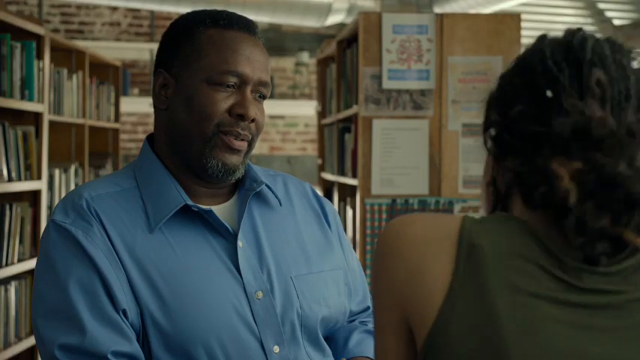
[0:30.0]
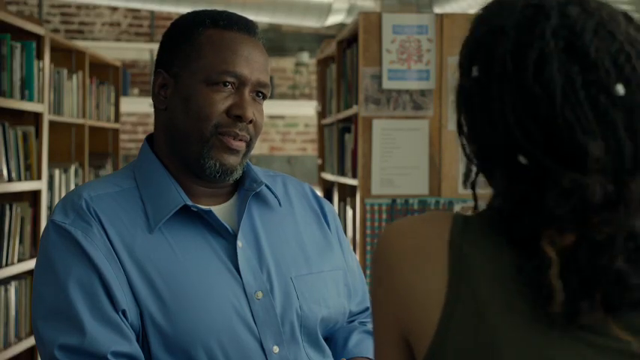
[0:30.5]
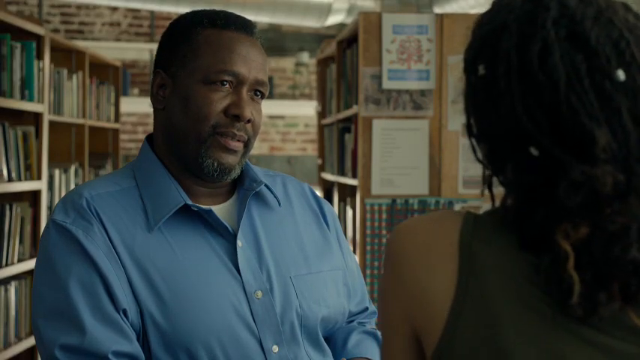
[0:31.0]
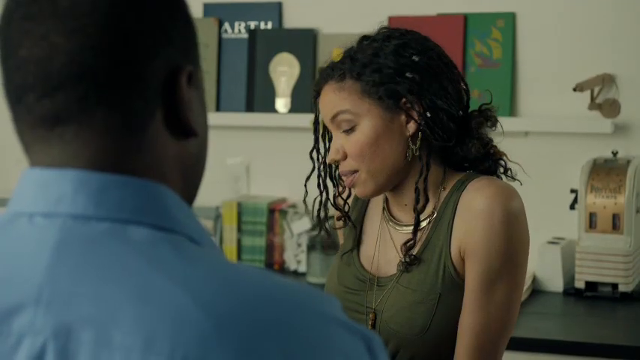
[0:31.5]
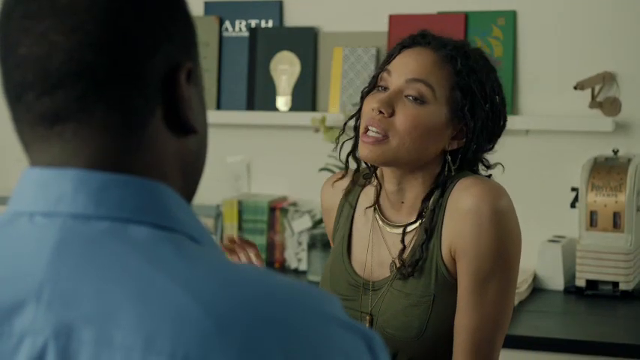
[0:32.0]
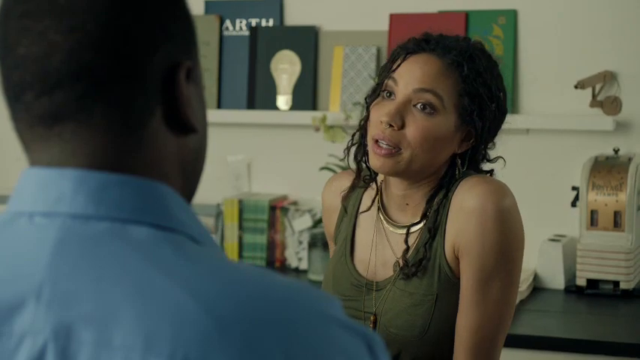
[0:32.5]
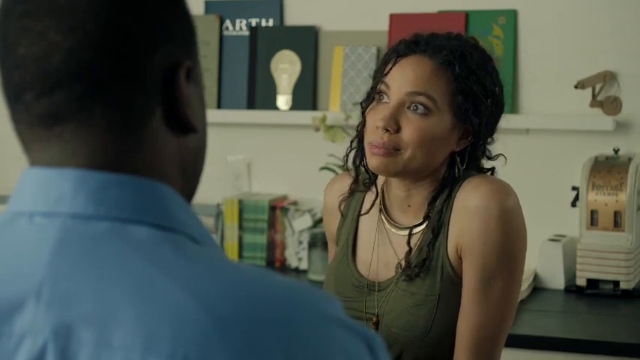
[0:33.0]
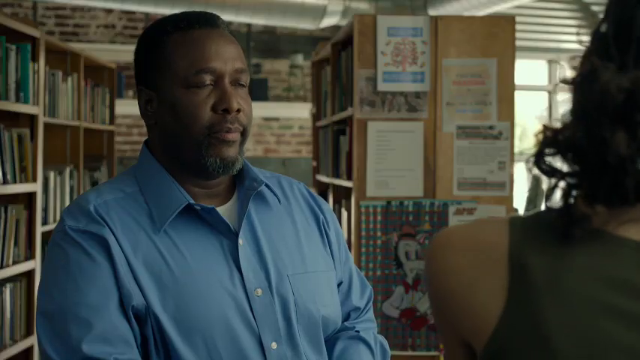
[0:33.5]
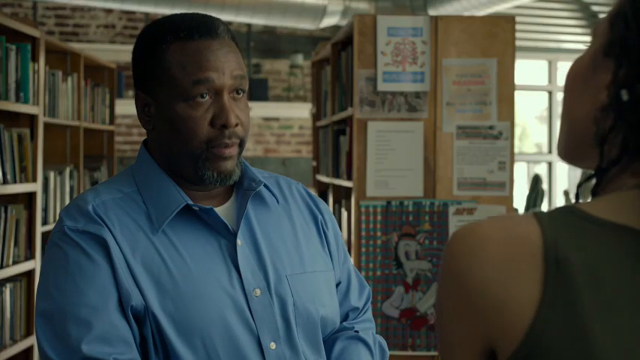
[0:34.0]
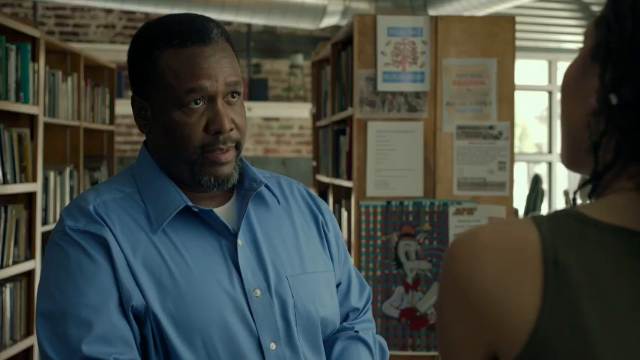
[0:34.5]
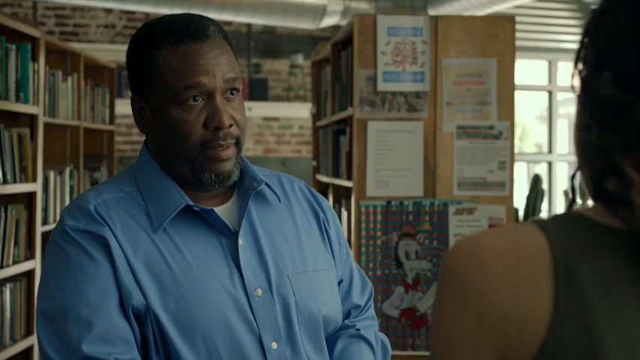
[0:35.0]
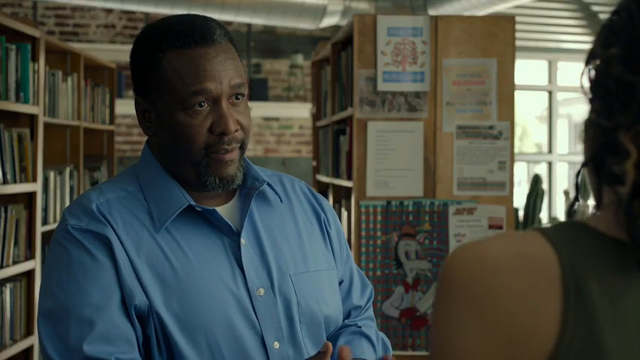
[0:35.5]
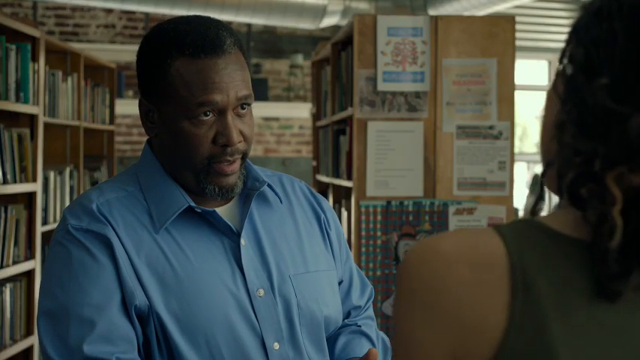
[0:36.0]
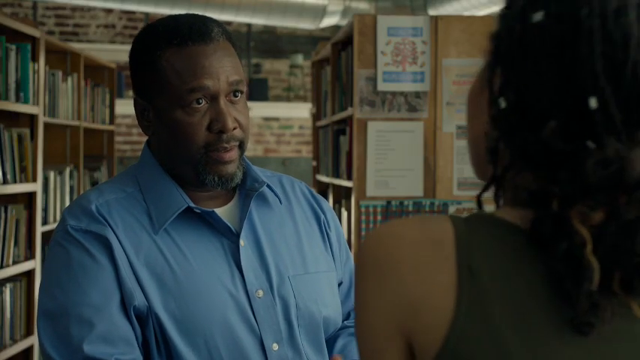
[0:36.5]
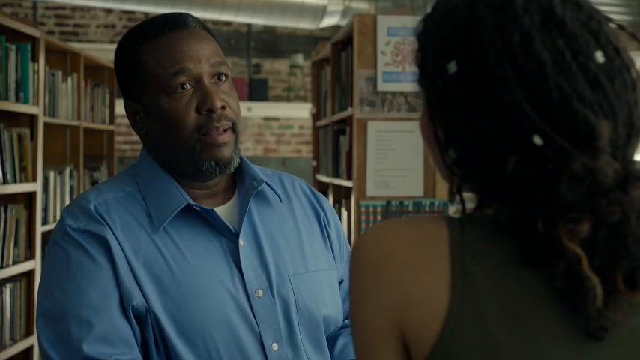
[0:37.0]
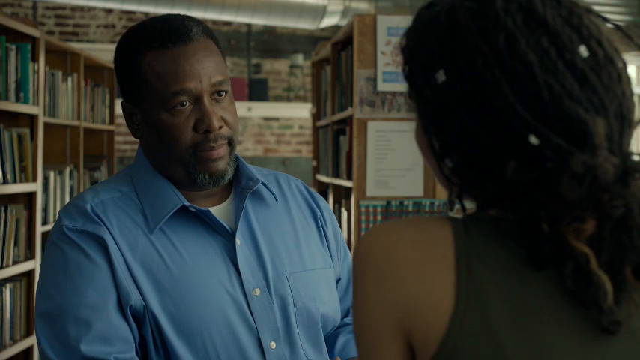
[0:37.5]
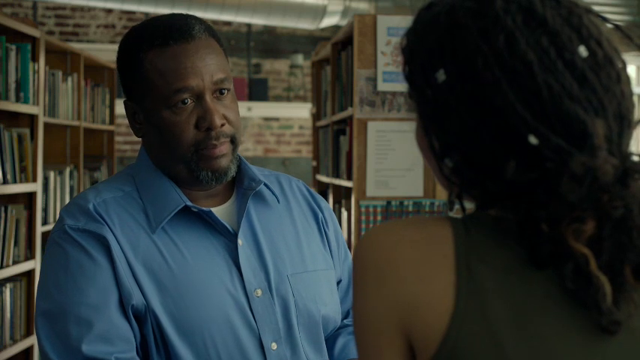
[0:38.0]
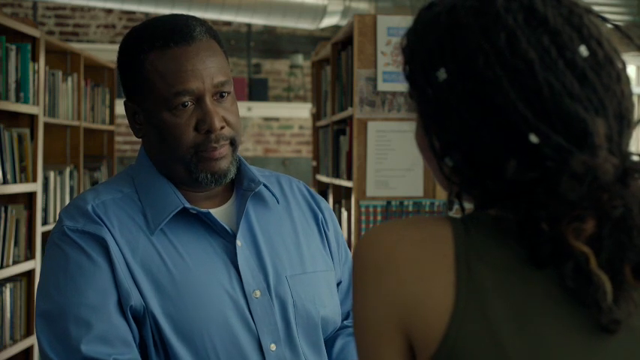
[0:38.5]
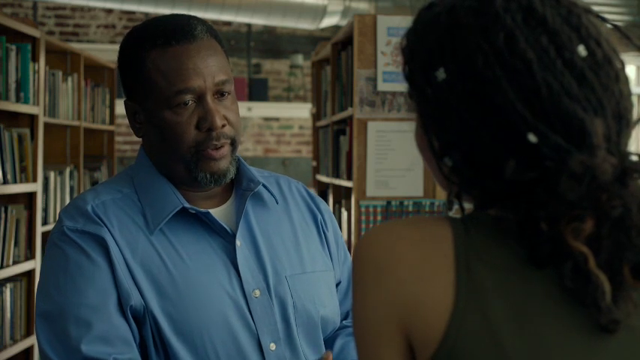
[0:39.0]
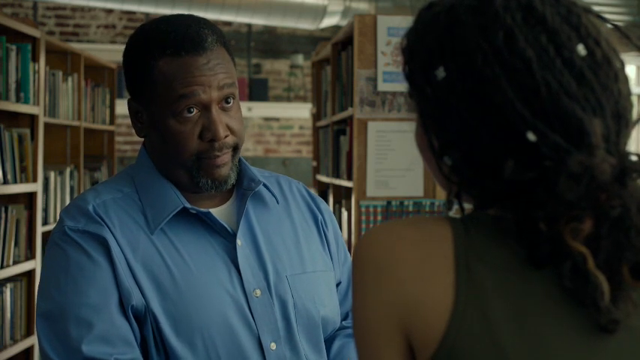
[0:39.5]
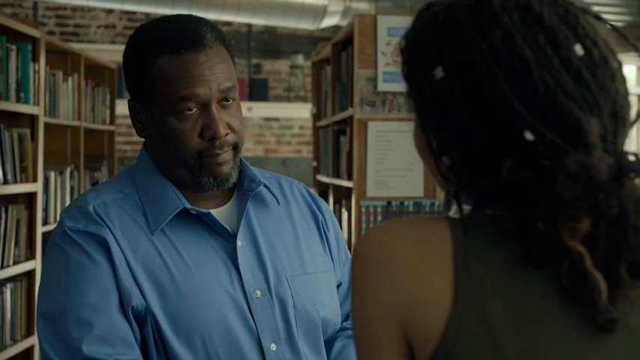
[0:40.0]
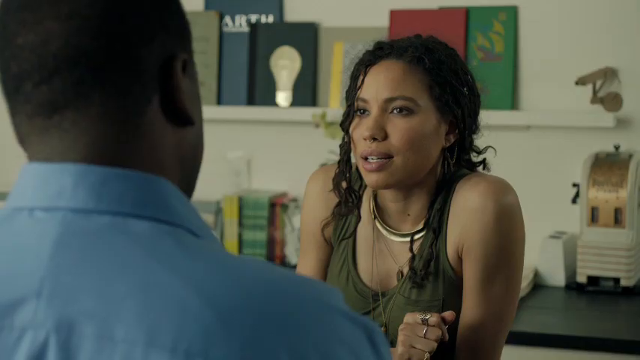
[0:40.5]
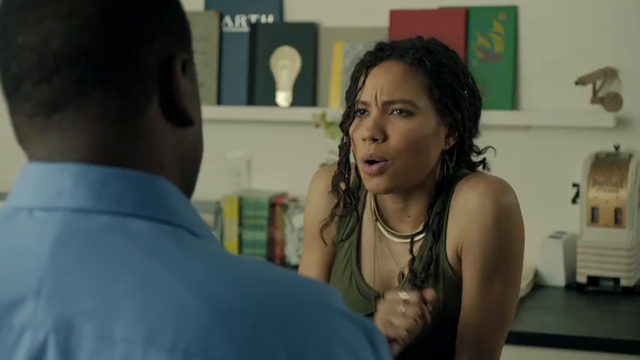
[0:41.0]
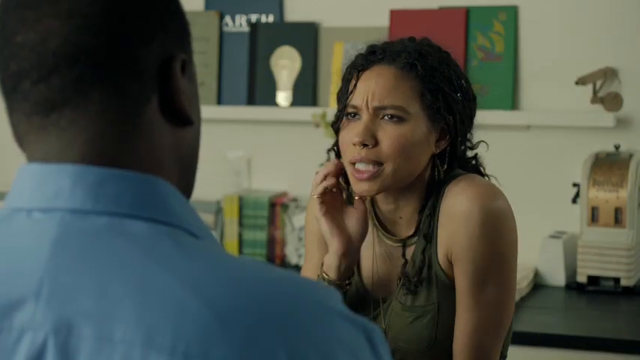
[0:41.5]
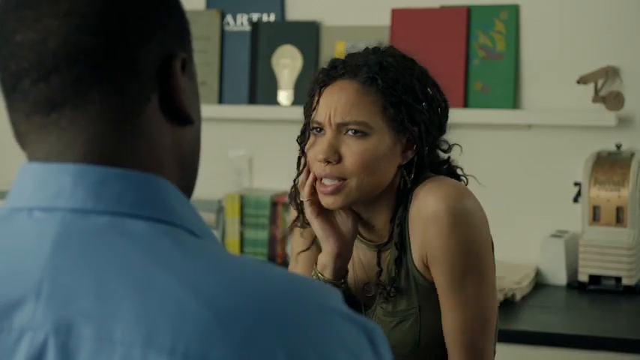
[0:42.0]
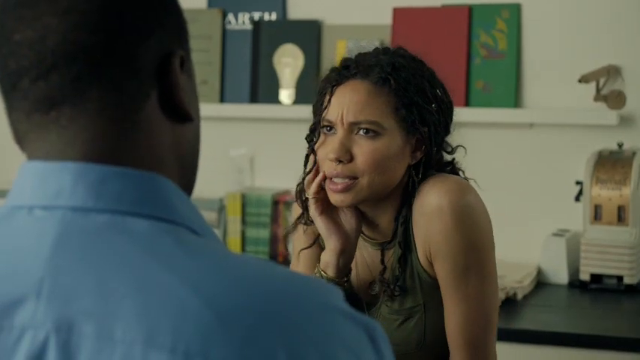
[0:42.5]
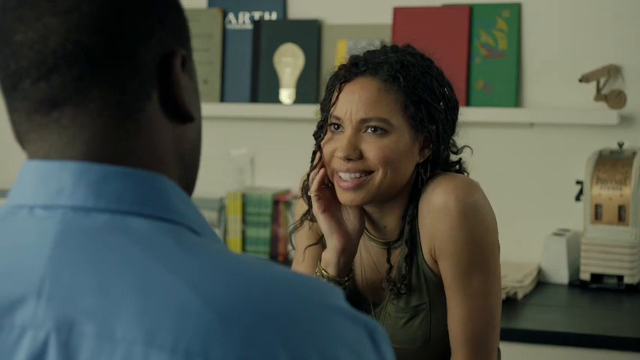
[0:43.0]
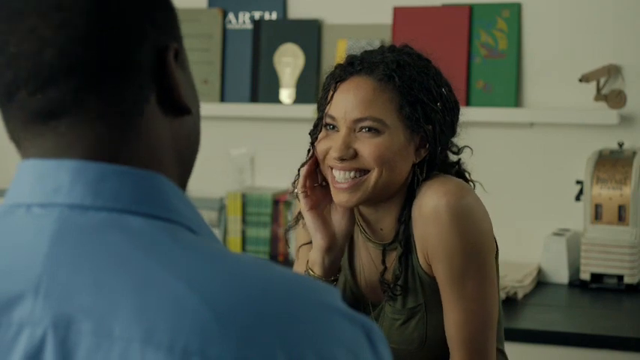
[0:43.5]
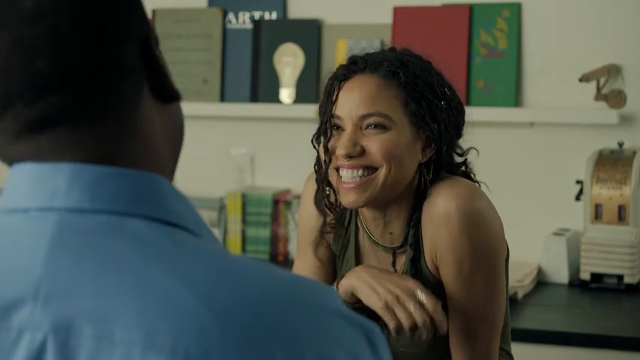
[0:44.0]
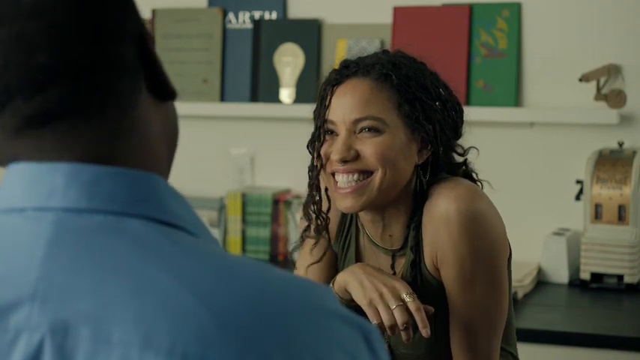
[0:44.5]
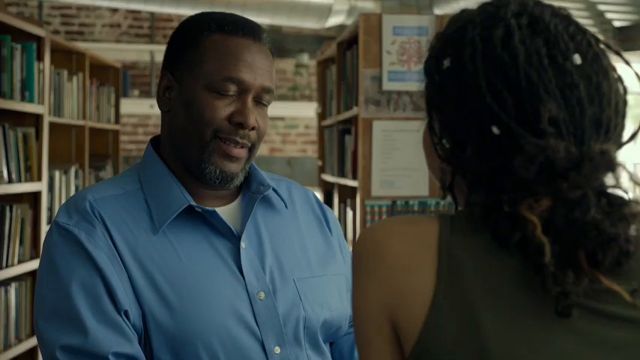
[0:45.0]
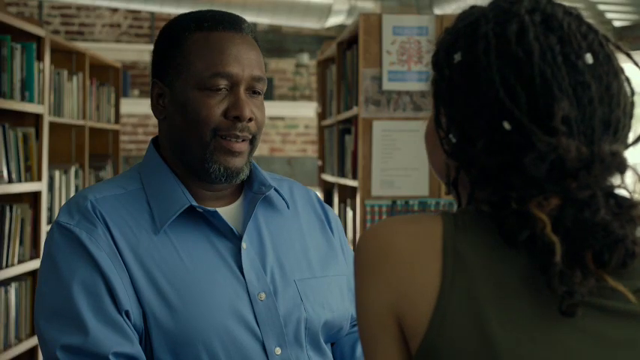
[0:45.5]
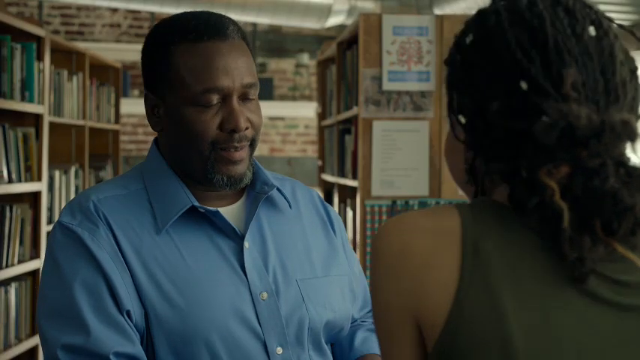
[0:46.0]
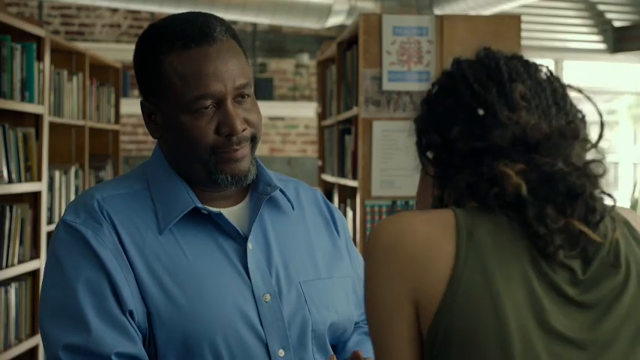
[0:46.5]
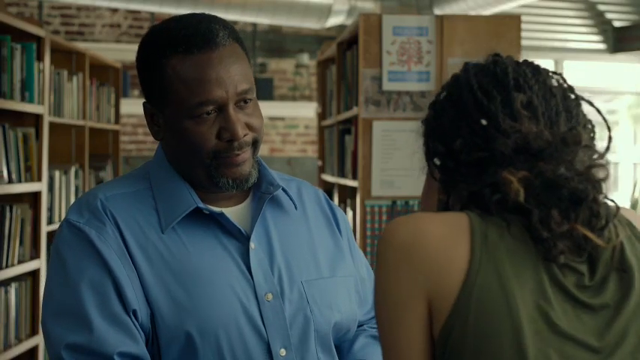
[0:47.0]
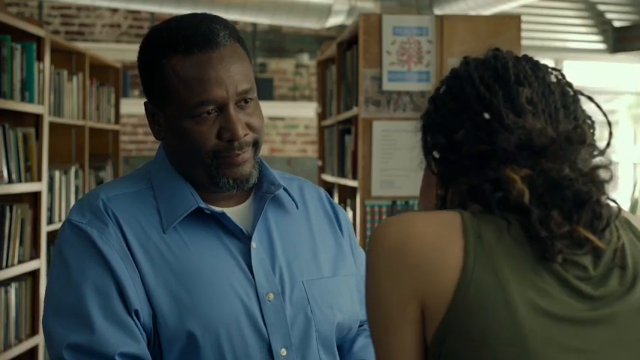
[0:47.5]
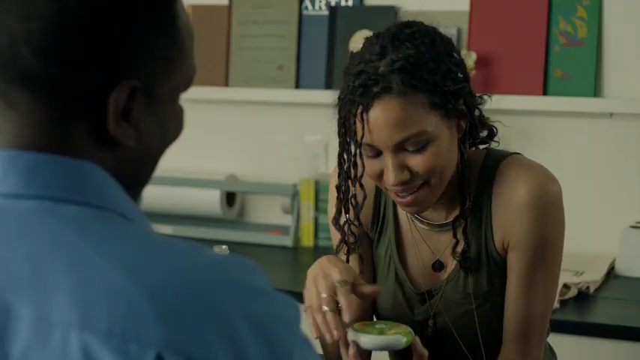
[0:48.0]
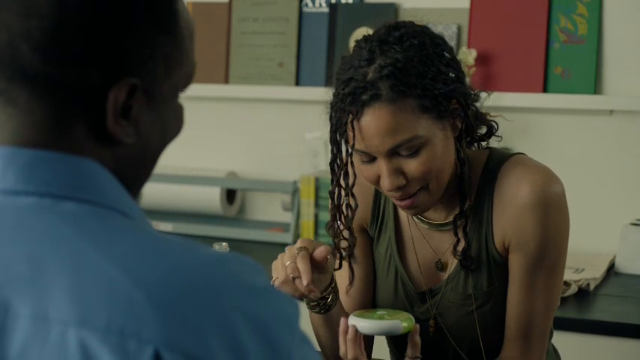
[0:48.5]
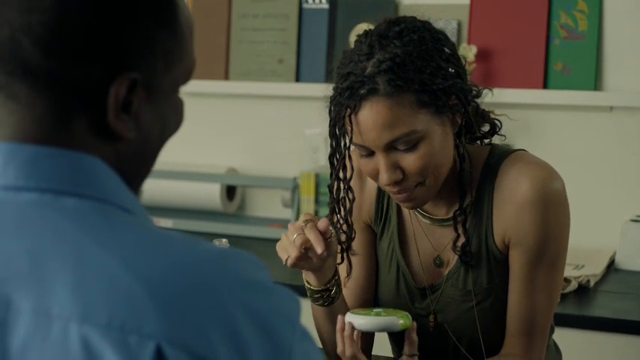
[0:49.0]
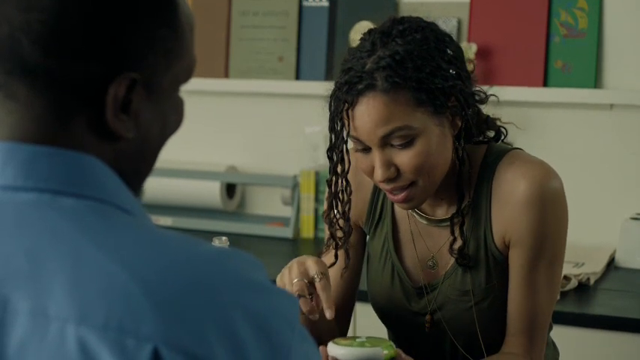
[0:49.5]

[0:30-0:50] The scene appears to be a library, with two multi-tiered bookshelves, probably about seven or eight feet high, on the left and right and a brick wall behind them. In the lower right corner of the foreground is the left two thirds of a young Black woman with dreadlocks and a dark green tank top. Just left of center, a Black man faces her, seen from the chest up, in a light blue button-up shirt with the top button unbuttoned and a white undershirt. He looks at her with a slightly confused expression. The camera switches sides so she is just right of center; she is looking down, then looks up at him with a kind of empathy-seeking face. The shot returns to him, looking a little confused, and he talks to her some more, raising his eyebrows. Her eyebrows draw together in a confused look, creating a wrinkle between them.